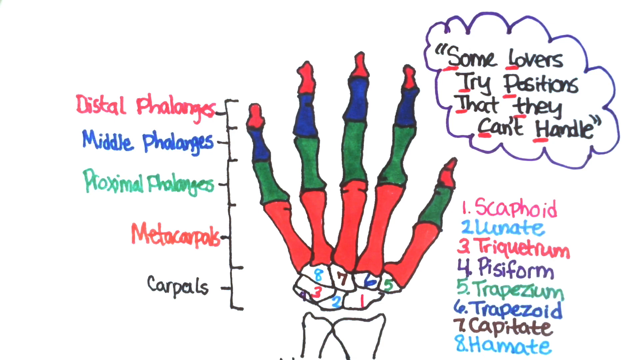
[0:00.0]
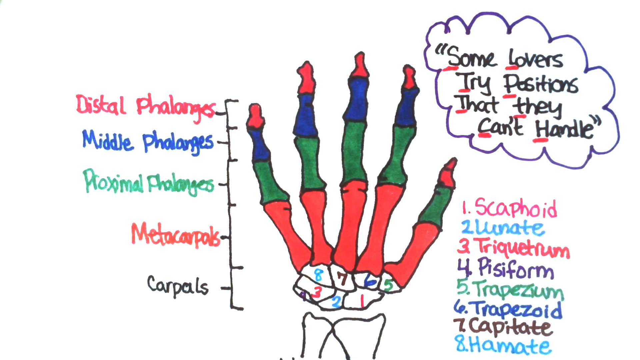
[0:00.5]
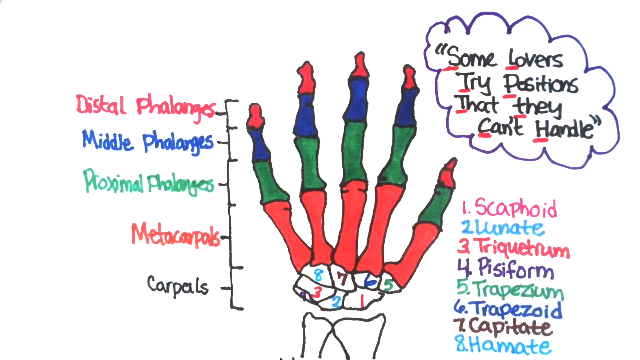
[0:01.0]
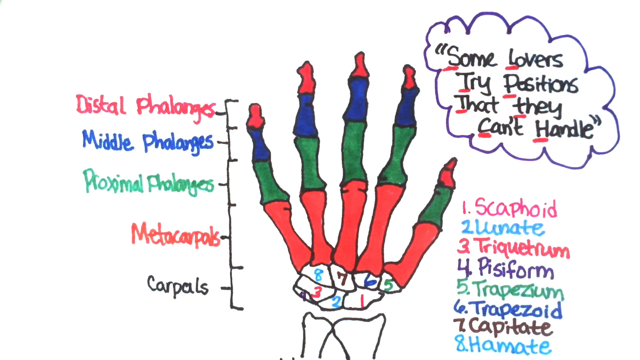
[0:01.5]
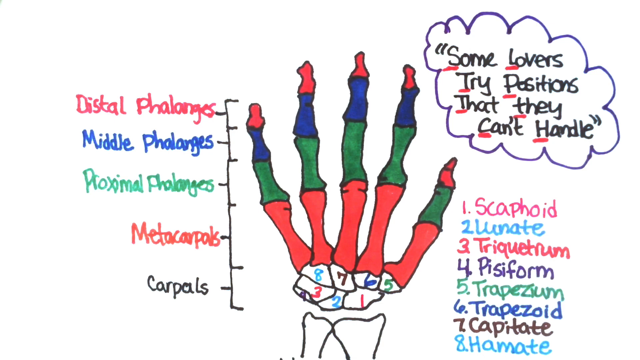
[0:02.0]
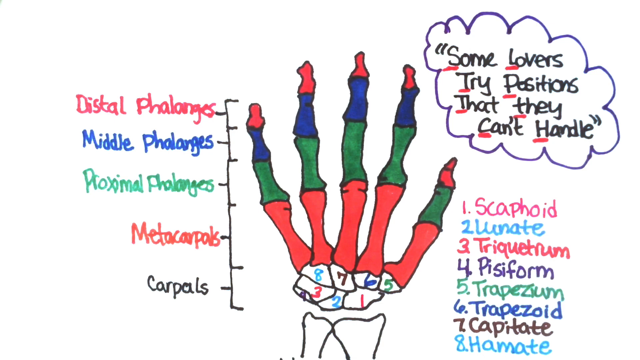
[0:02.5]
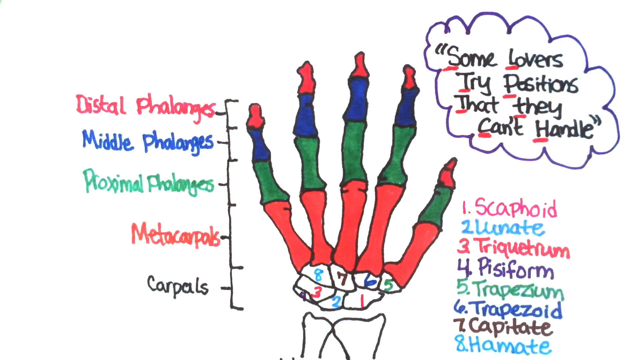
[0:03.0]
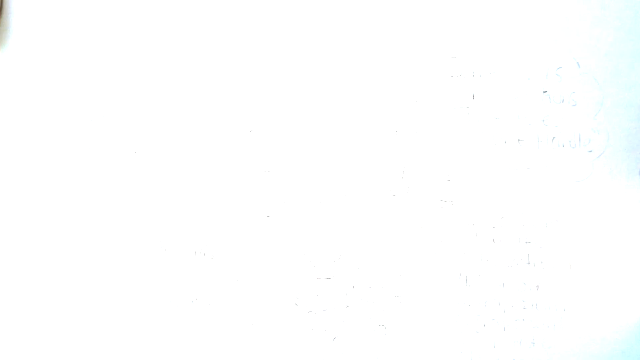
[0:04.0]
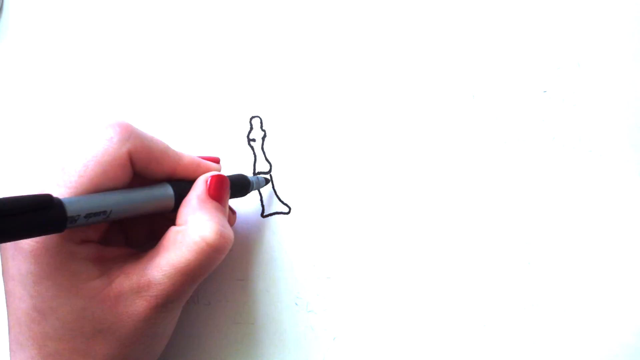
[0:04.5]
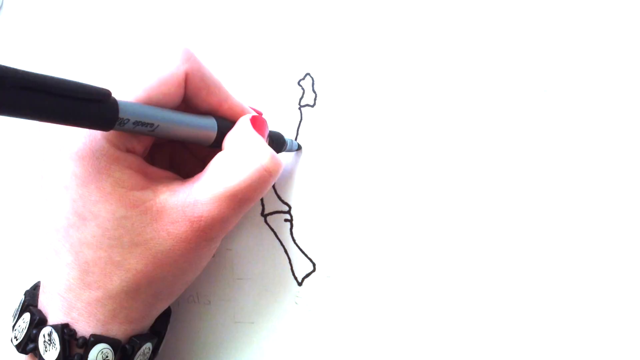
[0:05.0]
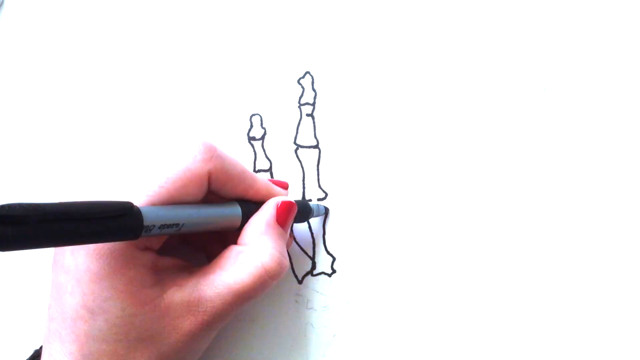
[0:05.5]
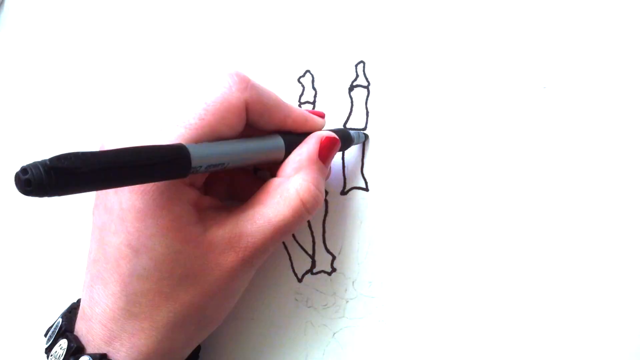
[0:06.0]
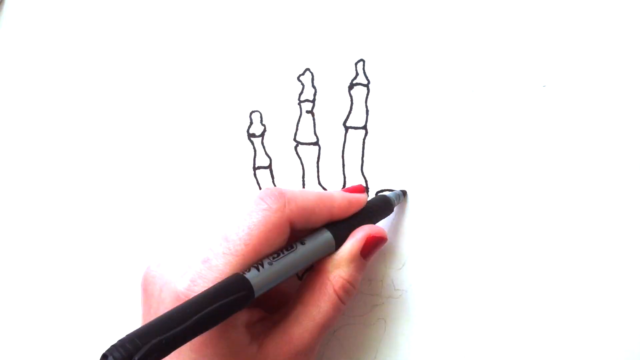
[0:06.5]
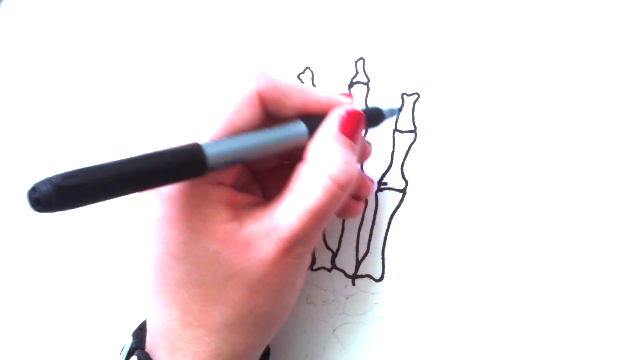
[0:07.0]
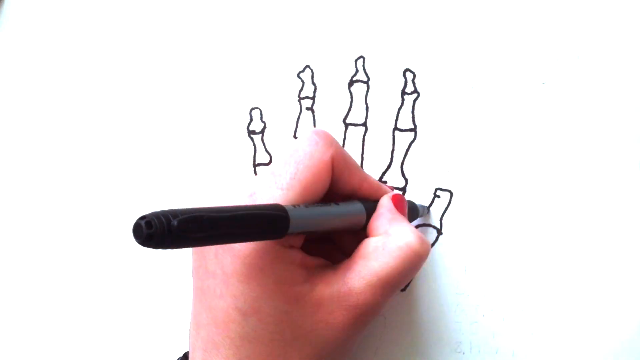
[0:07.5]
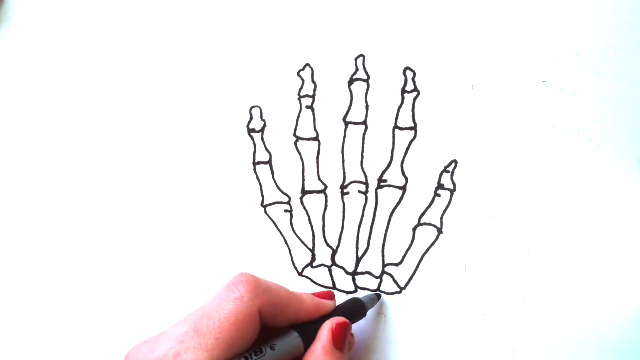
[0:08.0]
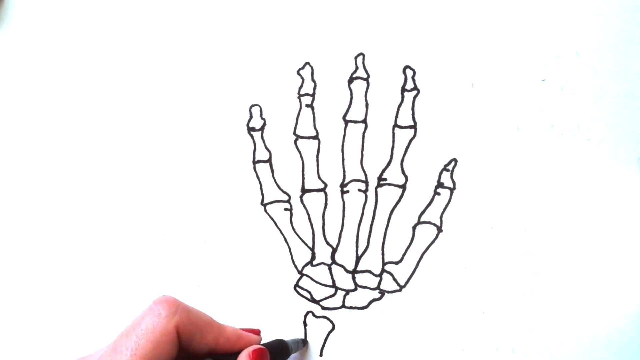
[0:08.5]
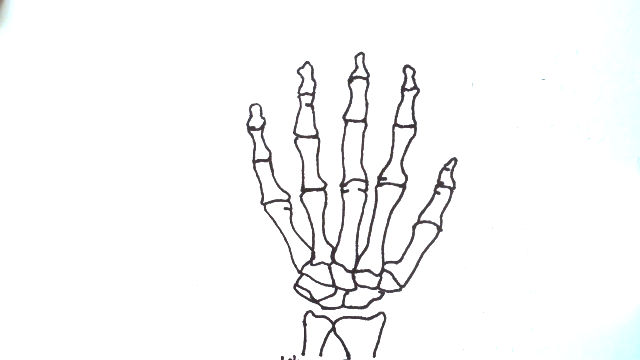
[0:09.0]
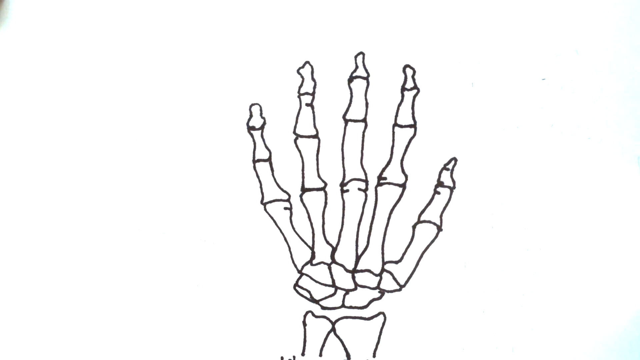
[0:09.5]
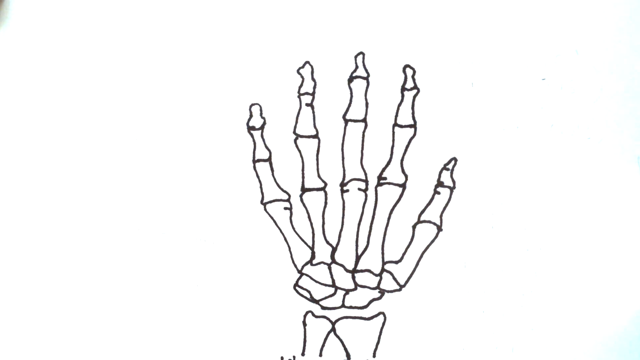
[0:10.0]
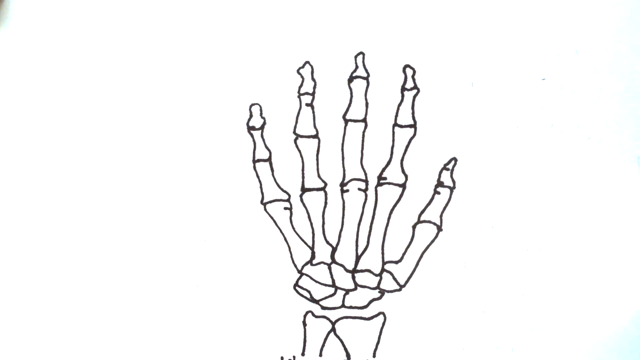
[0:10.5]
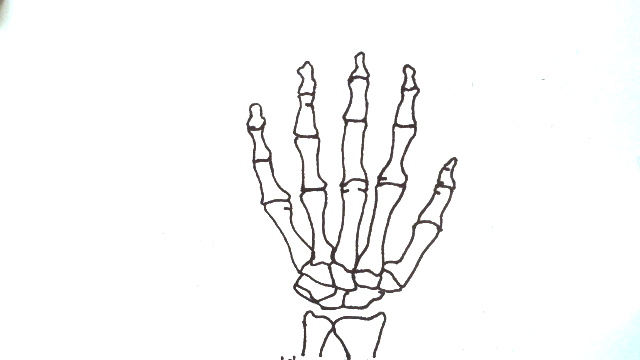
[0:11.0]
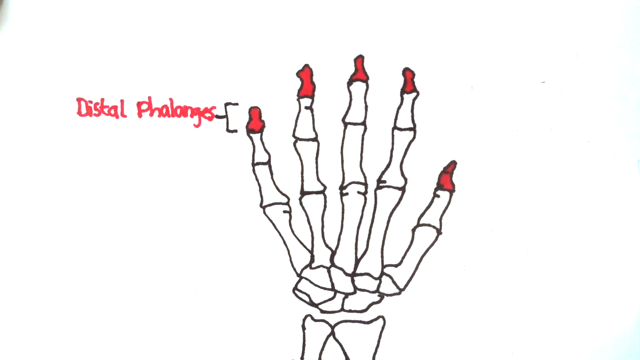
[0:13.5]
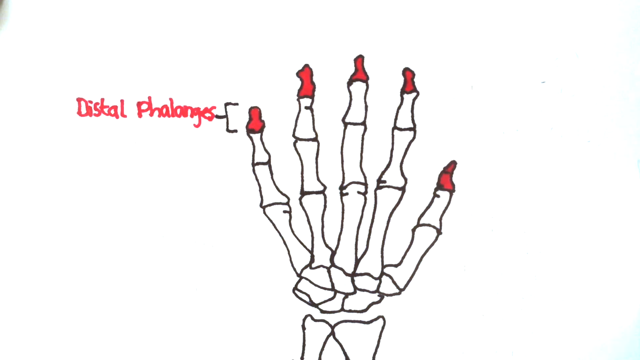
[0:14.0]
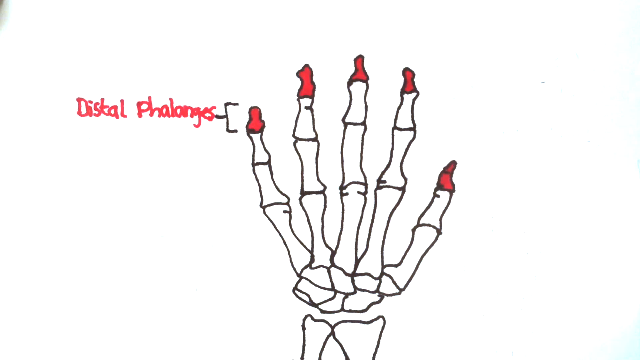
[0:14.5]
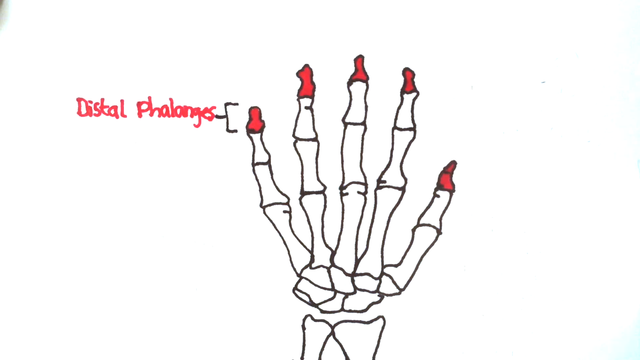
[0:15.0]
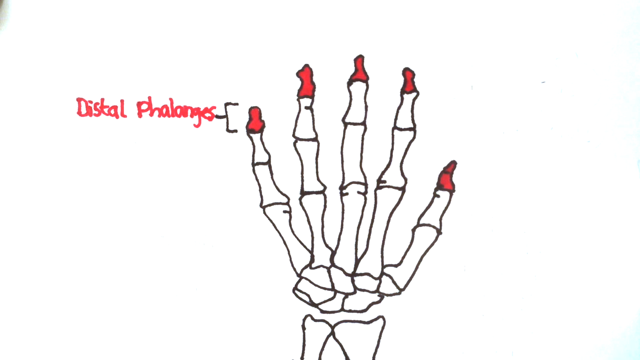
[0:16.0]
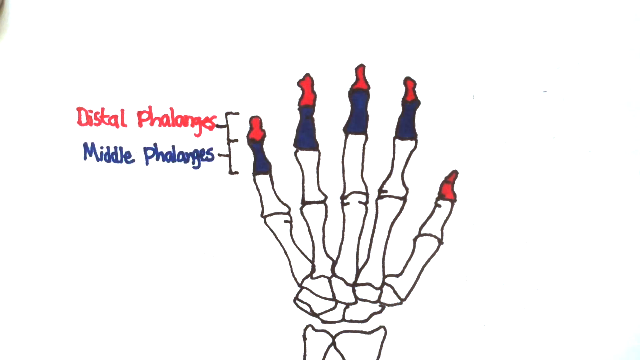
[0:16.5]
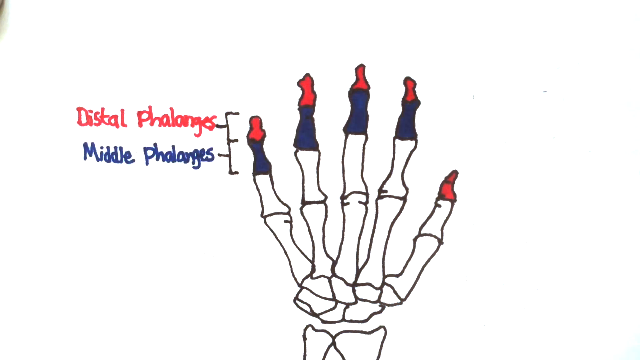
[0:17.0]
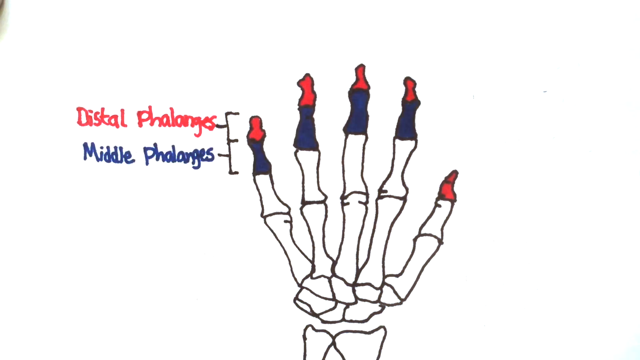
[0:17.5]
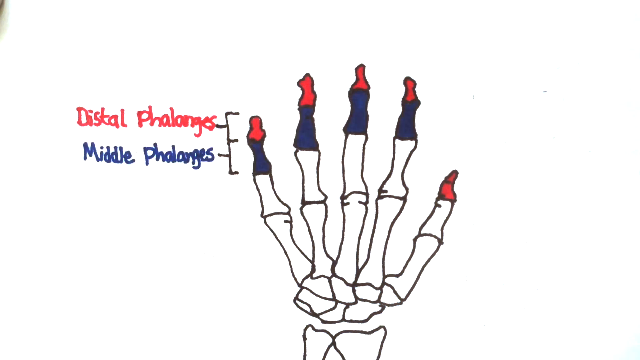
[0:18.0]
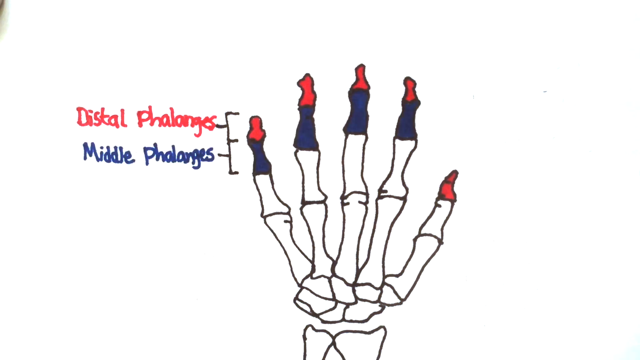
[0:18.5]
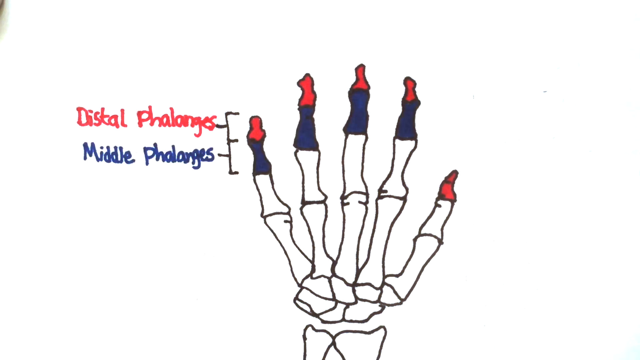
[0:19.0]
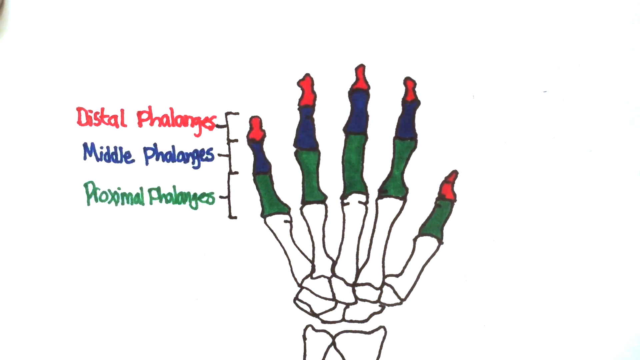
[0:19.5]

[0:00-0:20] The video opens on a white background with a drawing of the bones of a hand in the center. A little of the wrist bones is visible, then there is a gap, then the smaller bones of the hand. Numbers one, two and three run from right to left along the bottom, with five, six and seven just slightly above them. The thumb bones go up to the right and are colored red, then green, then red for the joints. The fingers extend across to the left; they are red near the hand, then green, then blue, and the tips are red. A line comes down to the left of them, with six dashes going over to the right and five dashes going to the left, and the names of each section are labeled. Up to the right is a small cloud-like circle with black lettering that says "some lovers try positions that they can't handle," with all of the first letters underlined. Right below the hand in the bottom right corner, numbers run from one to eight, top to bottom, each with a single word beside it in a different color. The video then shows a hand coming in from the bottom left, wearing a black bracelet with about 10 small white circles around it, kind of like small watch faces. The hand holds a pen that is black from the end to about halfway down, then silver, with a black grip and a silver tip. It draws the hand drawing in quick time, then the hand goes off the screen, and the tips are colored red and information is added to the left, then the blue, then more information to the left.